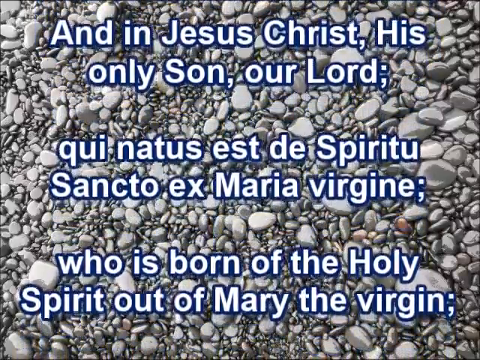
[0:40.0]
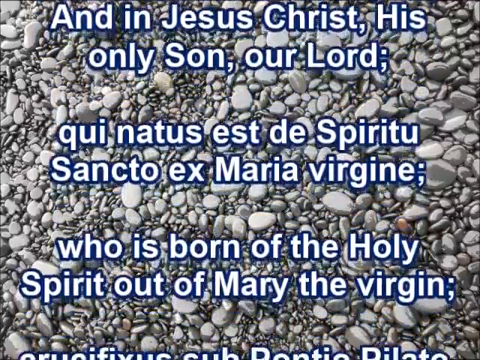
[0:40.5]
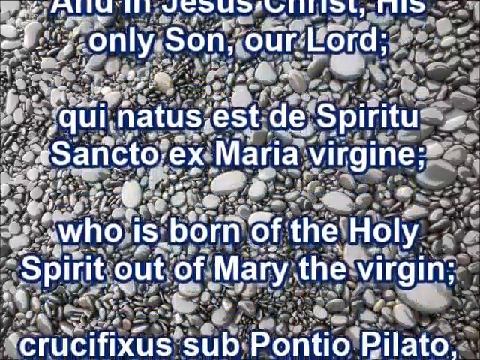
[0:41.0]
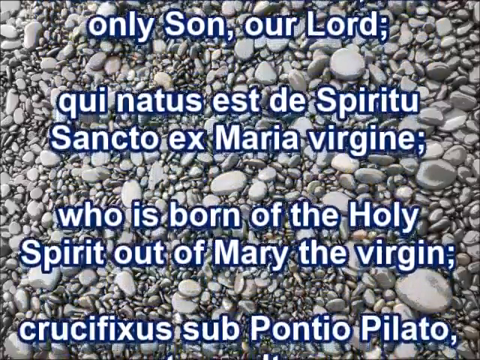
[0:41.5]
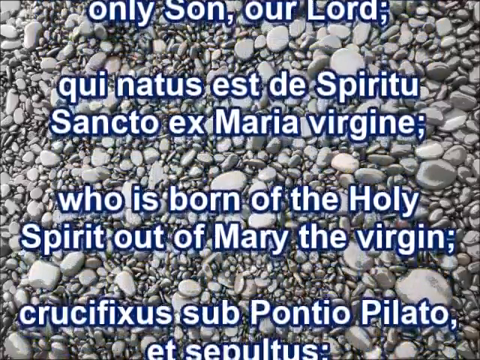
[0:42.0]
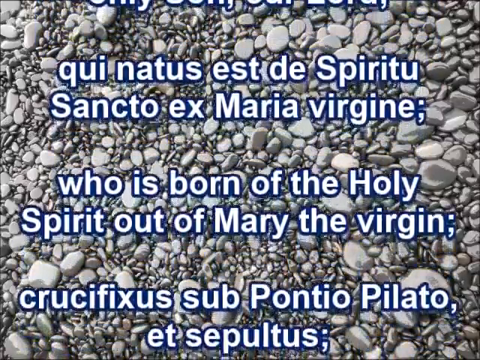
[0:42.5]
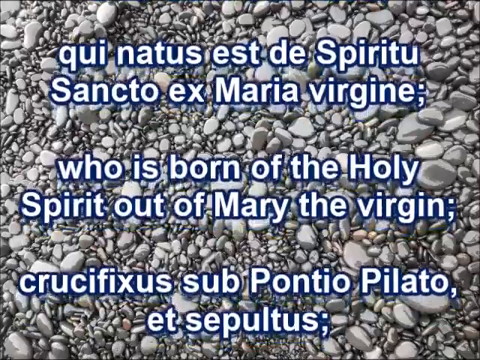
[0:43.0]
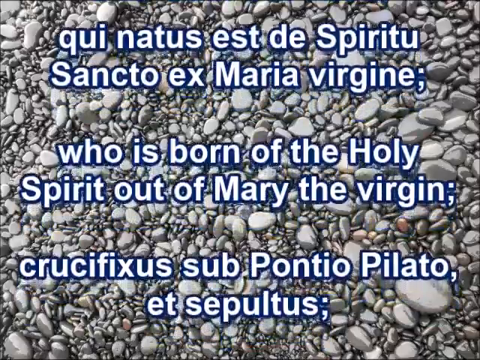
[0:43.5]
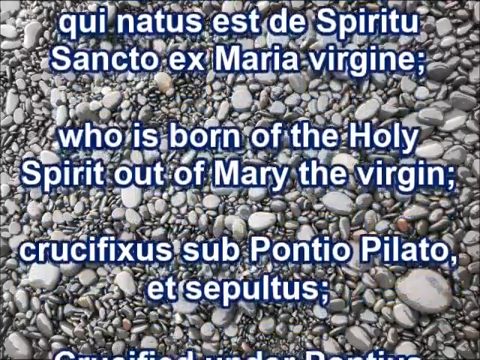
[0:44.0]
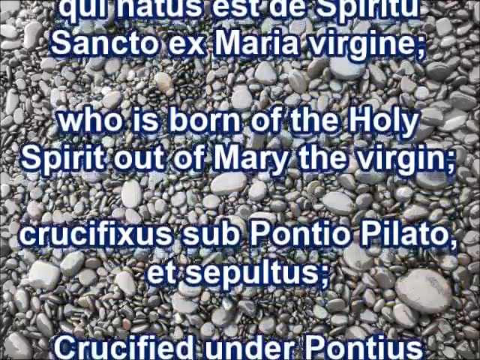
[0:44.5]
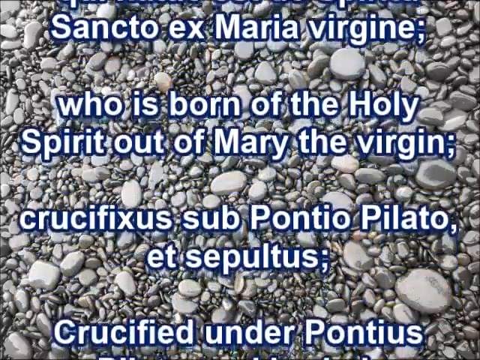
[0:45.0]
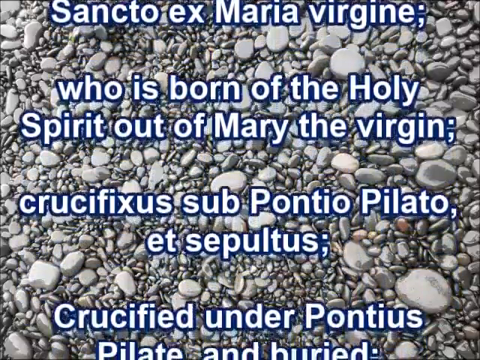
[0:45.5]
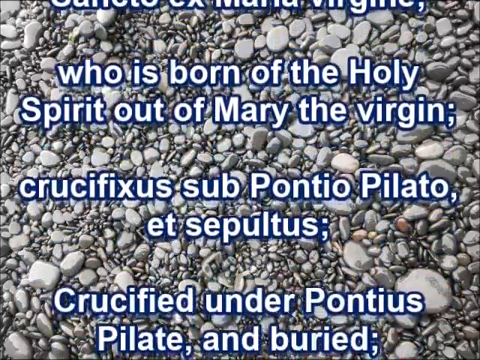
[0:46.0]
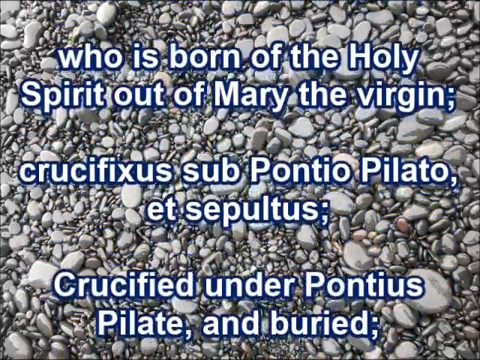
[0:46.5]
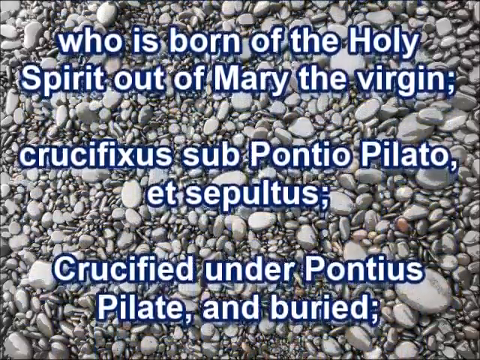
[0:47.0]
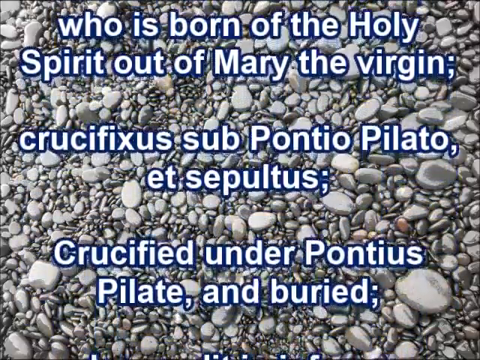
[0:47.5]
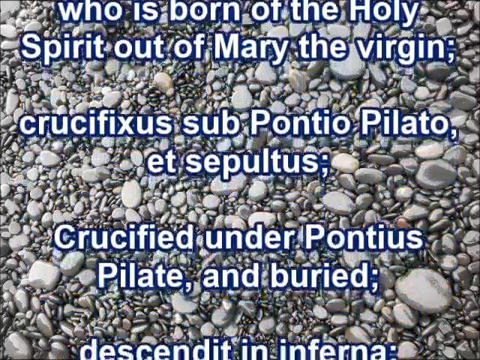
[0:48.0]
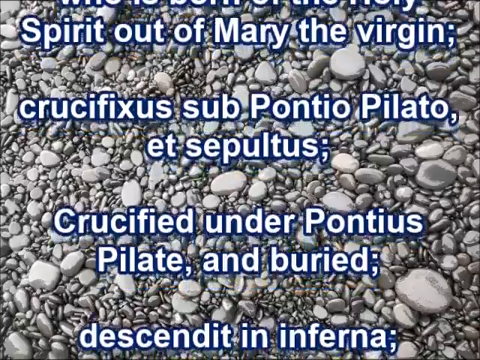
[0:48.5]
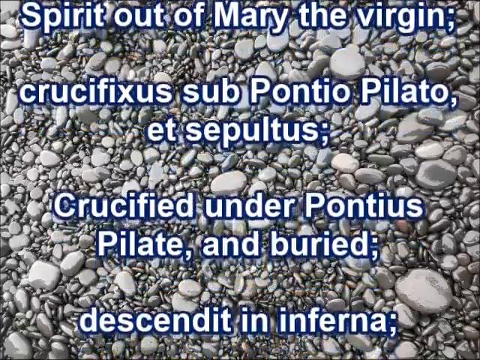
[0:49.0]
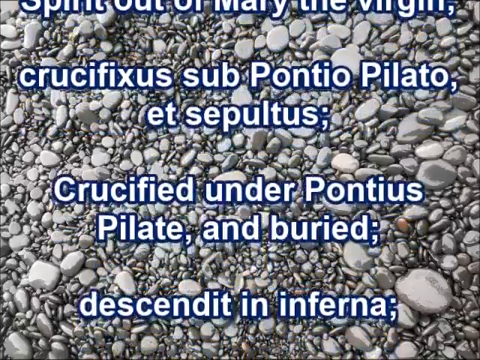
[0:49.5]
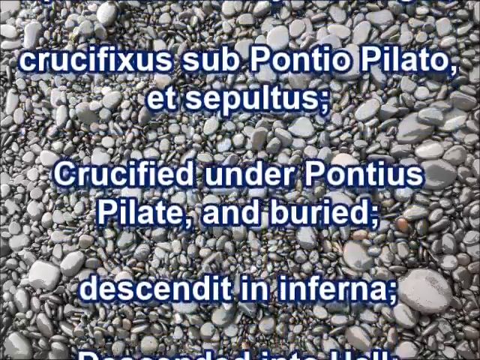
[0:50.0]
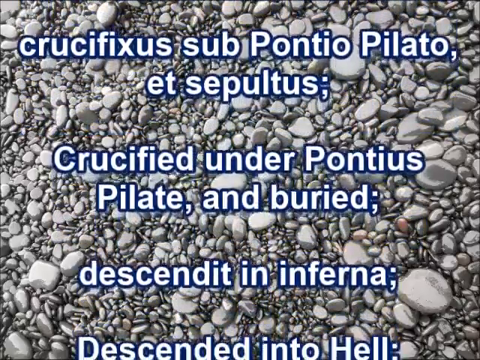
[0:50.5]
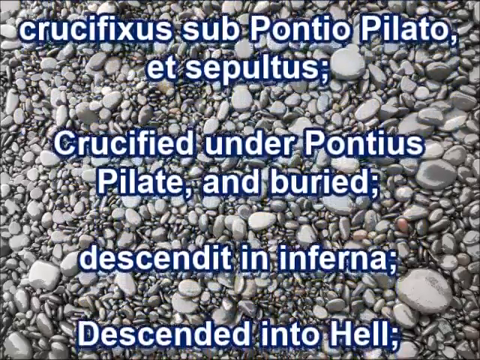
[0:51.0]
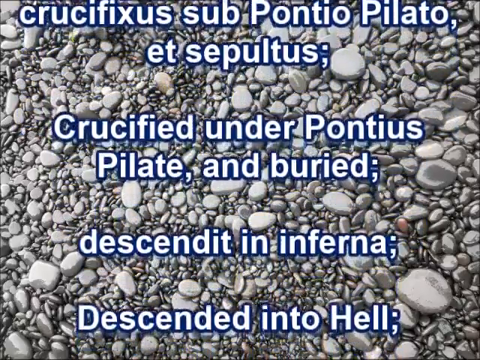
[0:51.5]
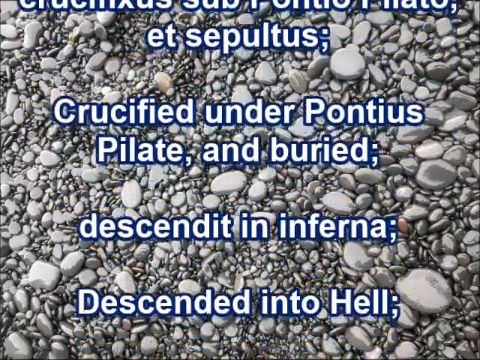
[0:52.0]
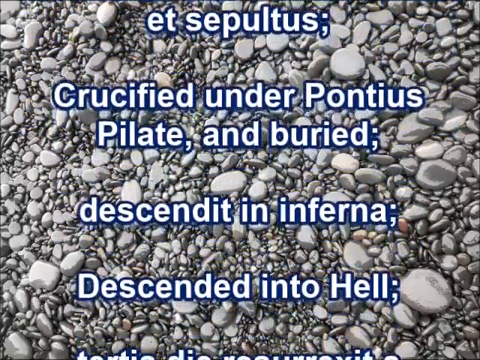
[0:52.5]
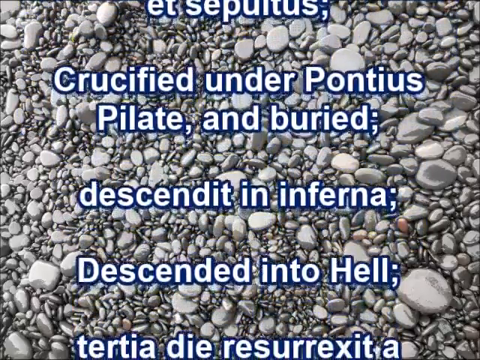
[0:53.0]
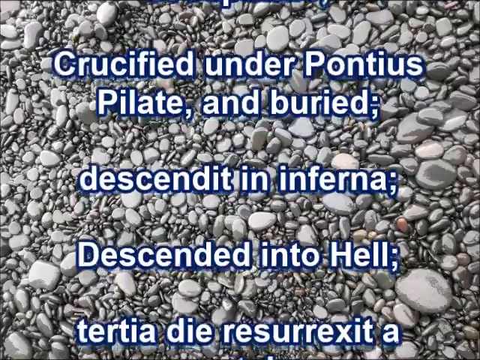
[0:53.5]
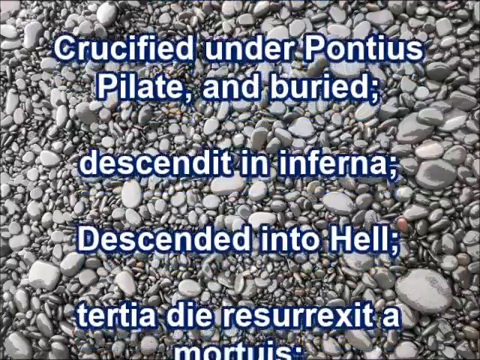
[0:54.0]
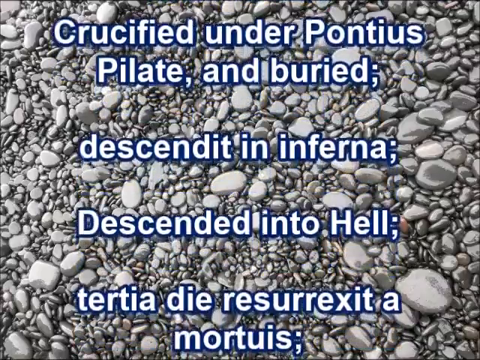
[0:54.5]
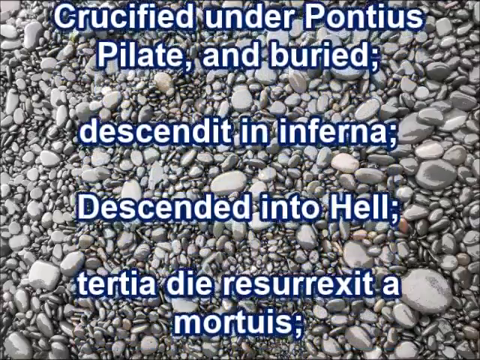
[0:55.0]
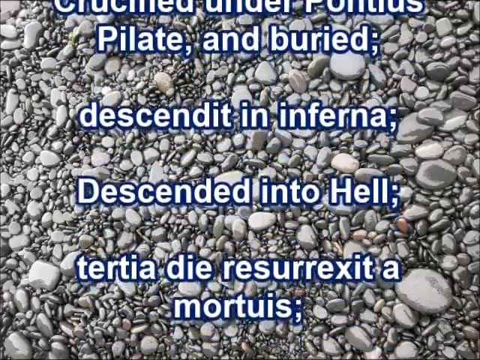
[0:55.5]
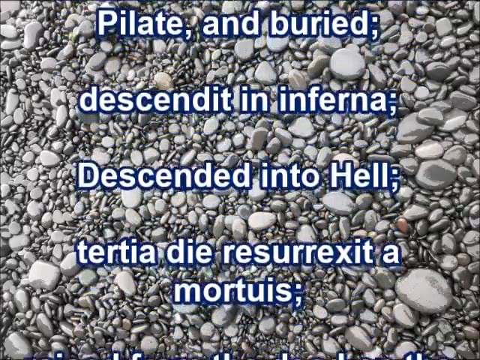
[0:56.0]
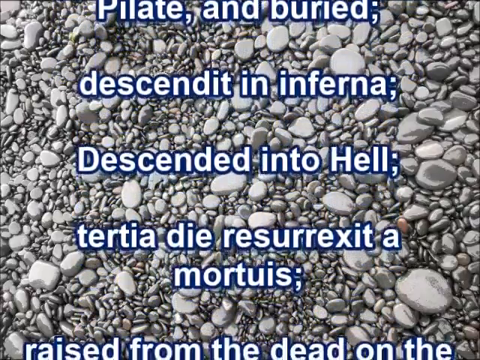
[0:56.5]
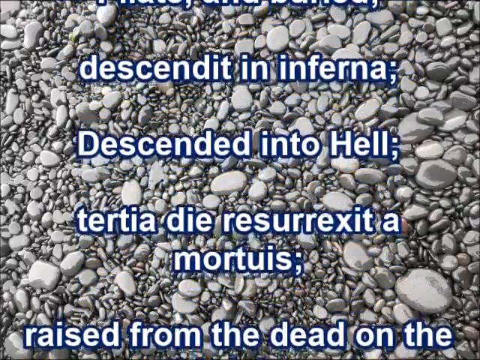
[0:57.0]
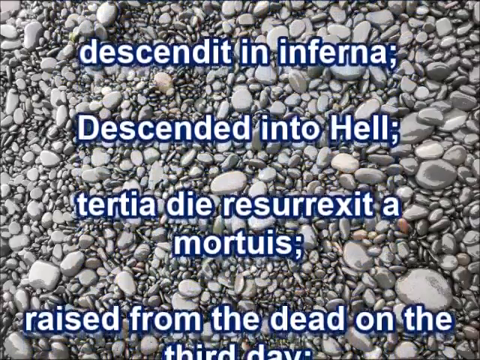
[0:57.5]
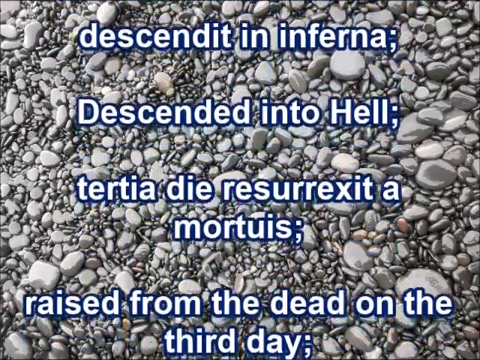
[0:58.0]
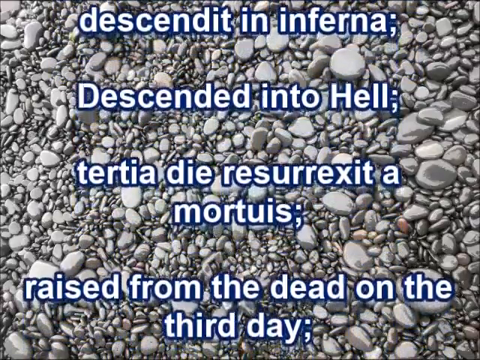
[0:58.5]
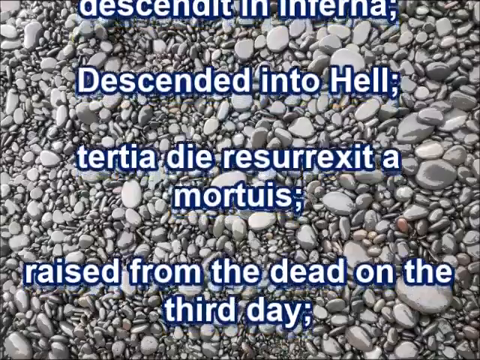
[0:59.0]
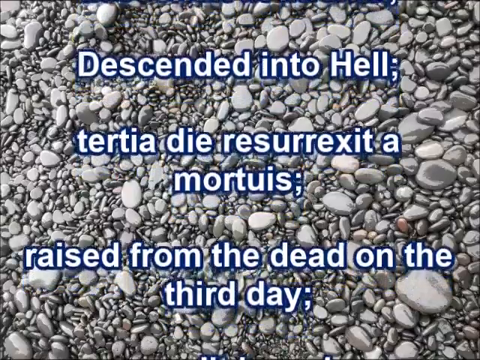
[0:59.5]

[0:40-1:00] The camera is focused down at the ground, where many pebbles and rocks are scattered and stacked on top of one another. Some pebbles are very small and other rocks are much larger; all have a circular or oval shape, and their colors range from white and light gray to dark gray. Spanish words are on the screen in white with a dark blue background. In the middle of the screen, the text says "Who is born of the Holy Spirit out of Mary the Virgin". After several seconds, the words continue moving from the bottom of the screen to the top. The text then reads "Crucified under Pontius Pilate and buried", followed by "Descended into hell, raised from the dead on the third day". Each English phrase is quickly followed by a Spanish translation of that phrase.